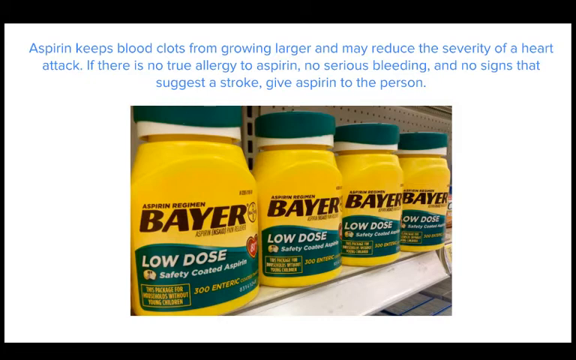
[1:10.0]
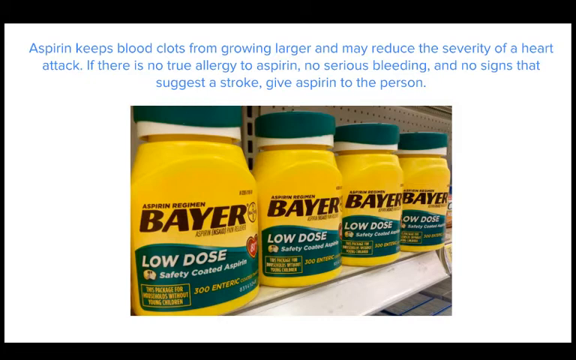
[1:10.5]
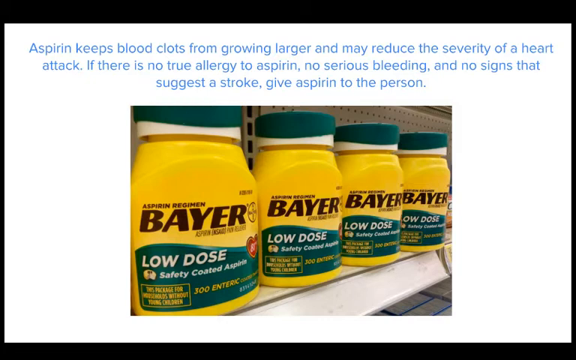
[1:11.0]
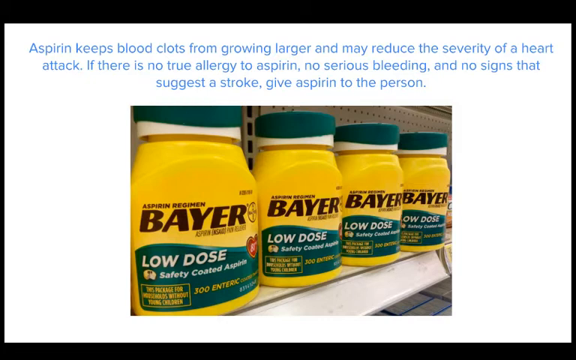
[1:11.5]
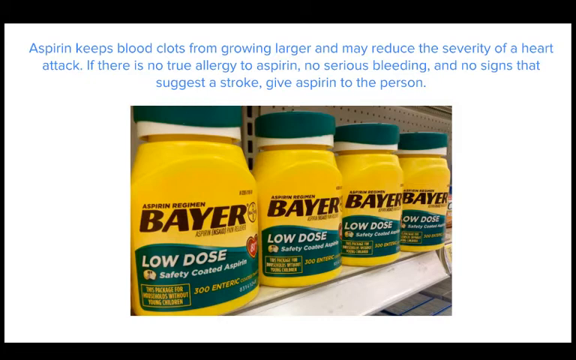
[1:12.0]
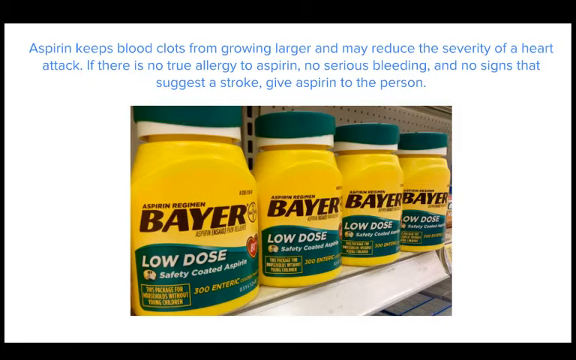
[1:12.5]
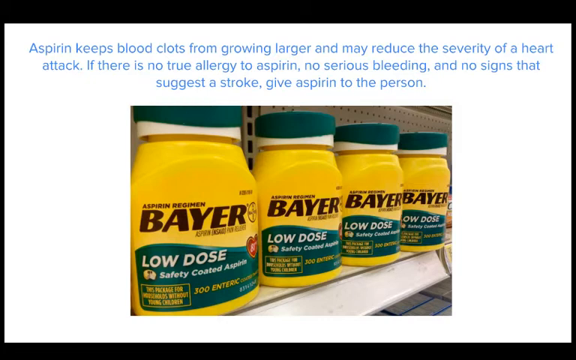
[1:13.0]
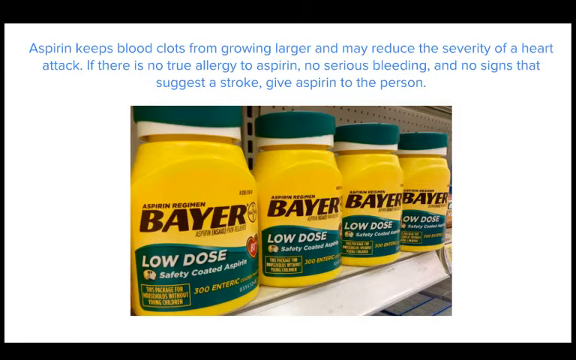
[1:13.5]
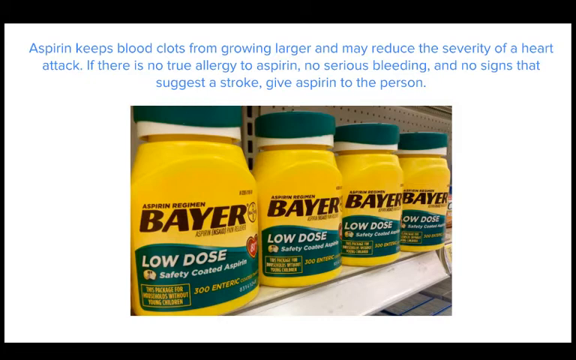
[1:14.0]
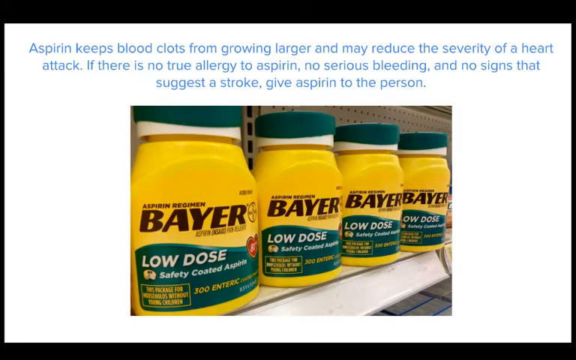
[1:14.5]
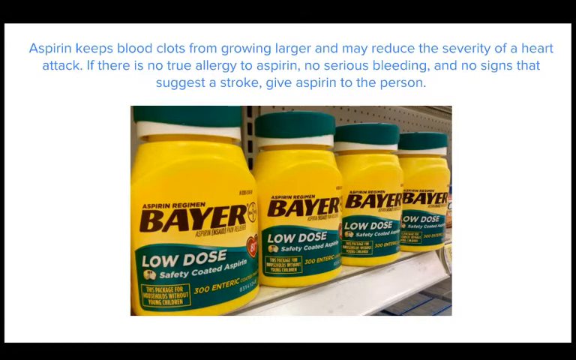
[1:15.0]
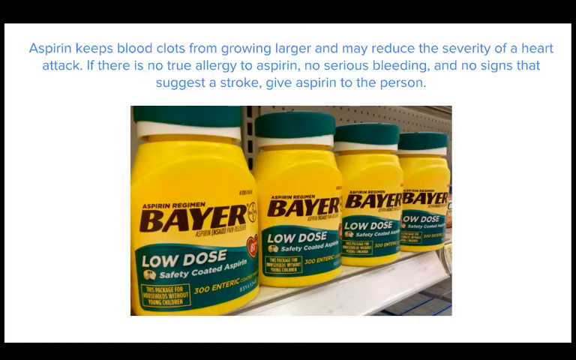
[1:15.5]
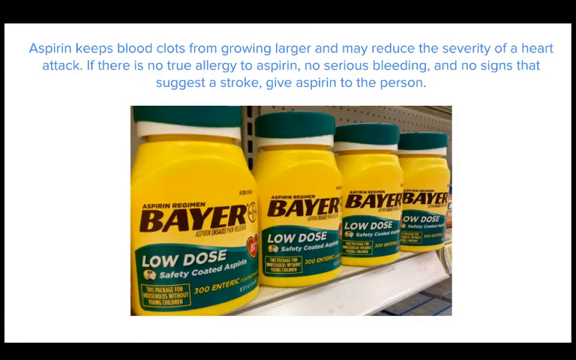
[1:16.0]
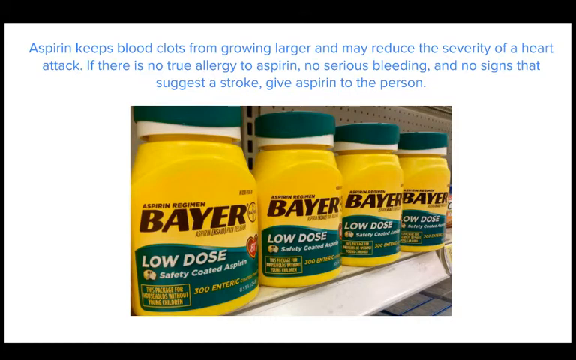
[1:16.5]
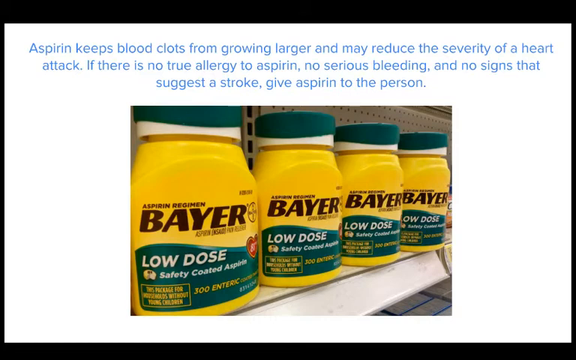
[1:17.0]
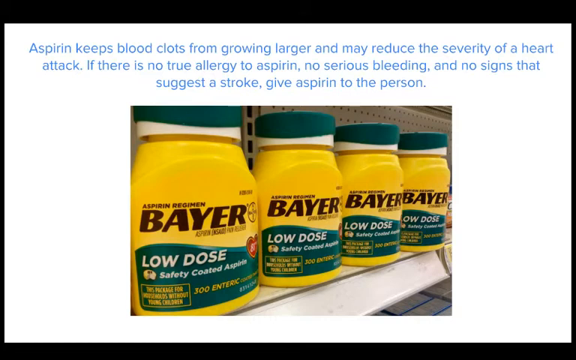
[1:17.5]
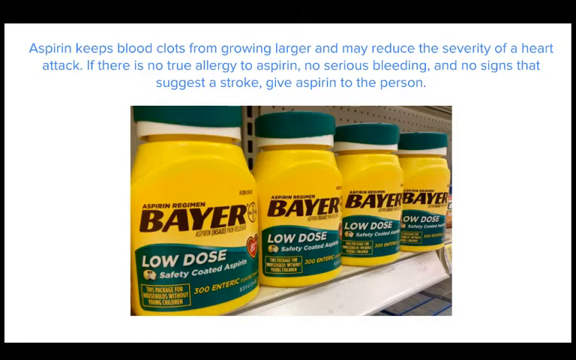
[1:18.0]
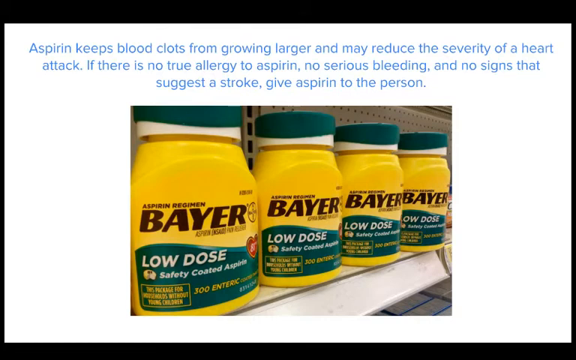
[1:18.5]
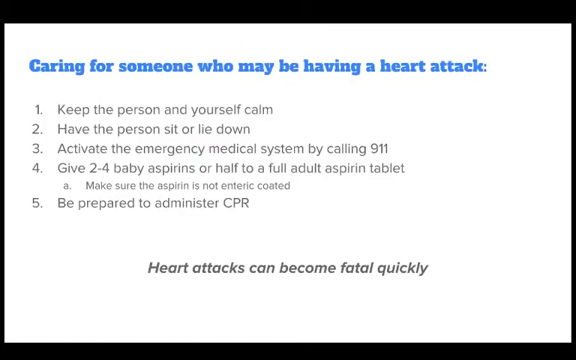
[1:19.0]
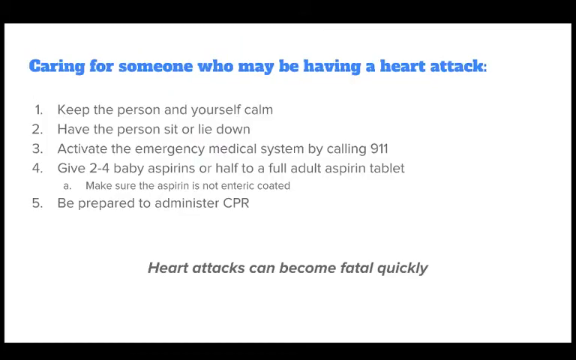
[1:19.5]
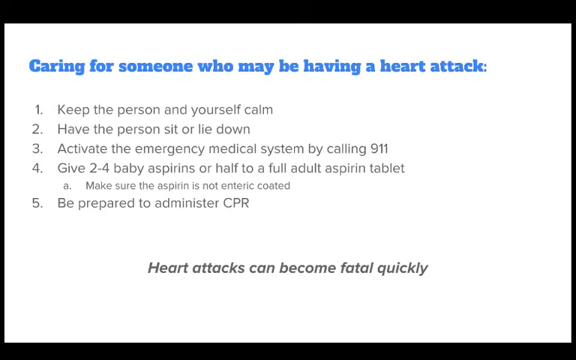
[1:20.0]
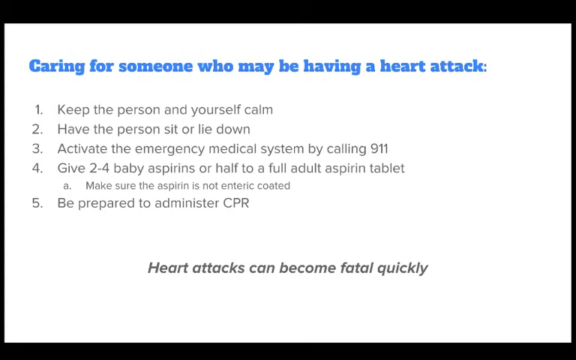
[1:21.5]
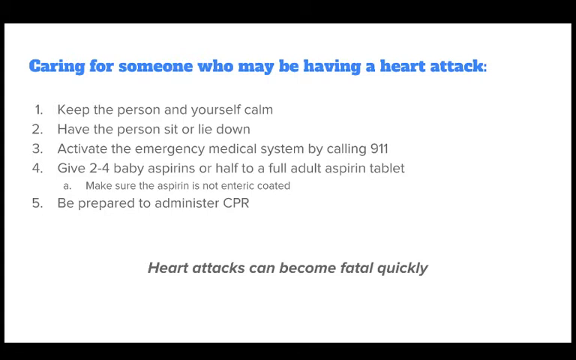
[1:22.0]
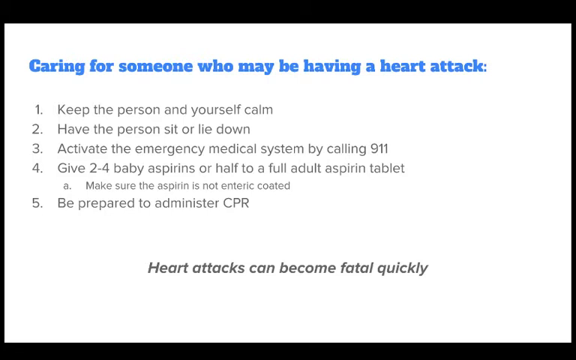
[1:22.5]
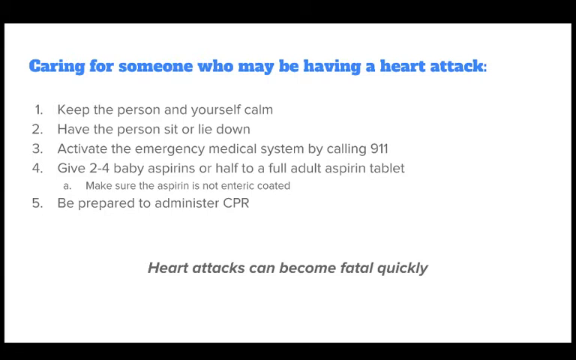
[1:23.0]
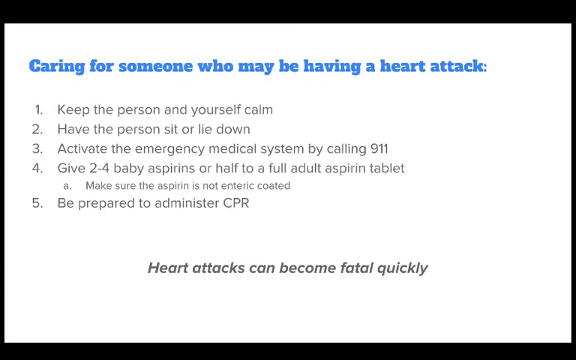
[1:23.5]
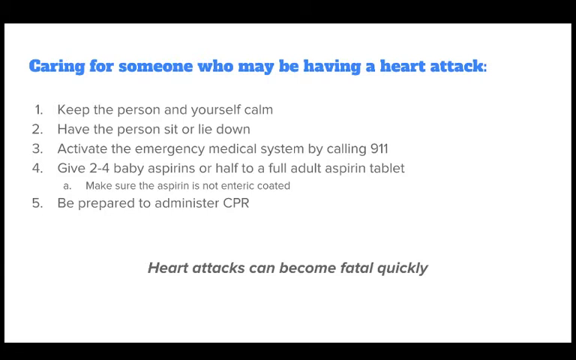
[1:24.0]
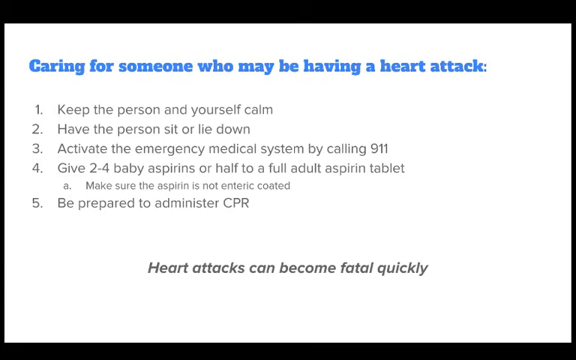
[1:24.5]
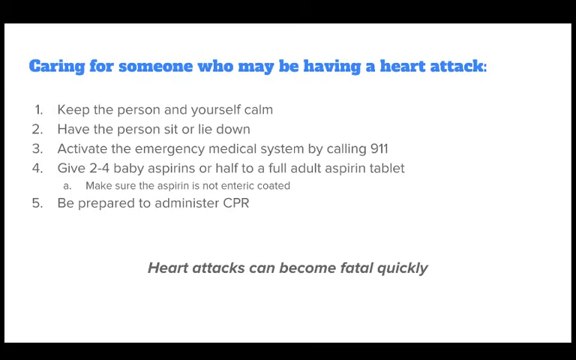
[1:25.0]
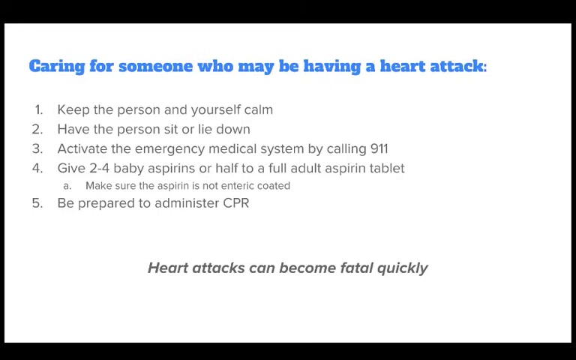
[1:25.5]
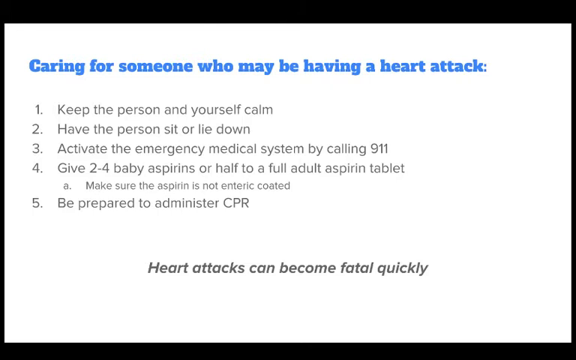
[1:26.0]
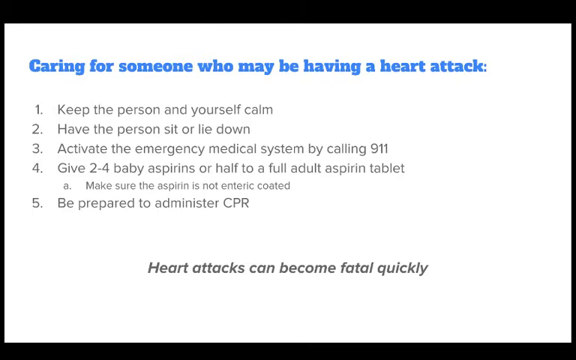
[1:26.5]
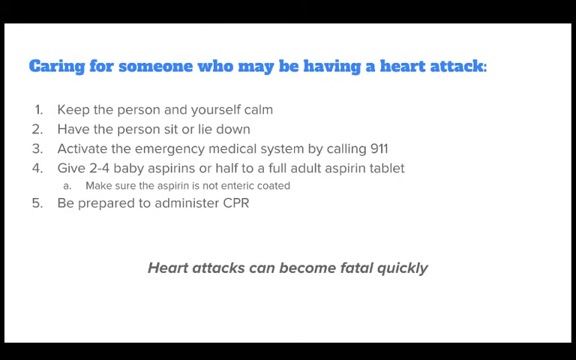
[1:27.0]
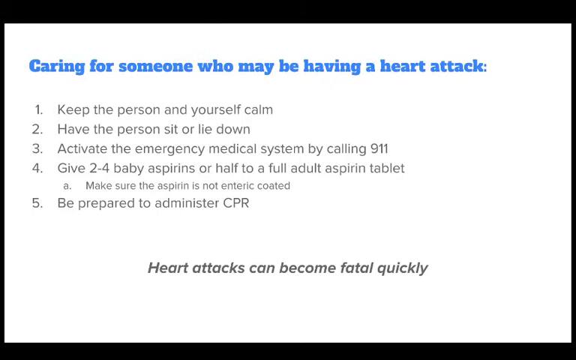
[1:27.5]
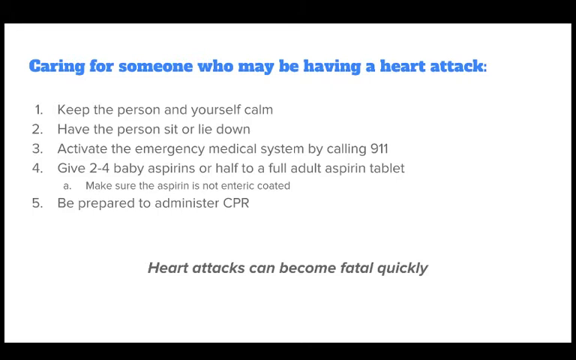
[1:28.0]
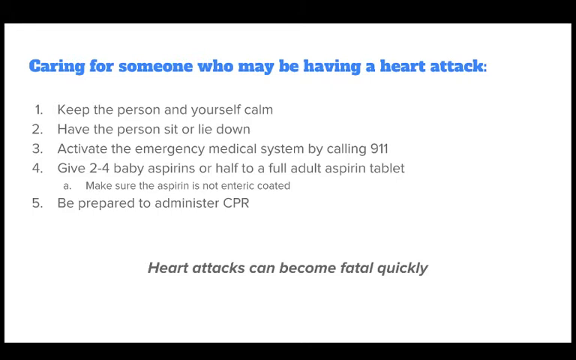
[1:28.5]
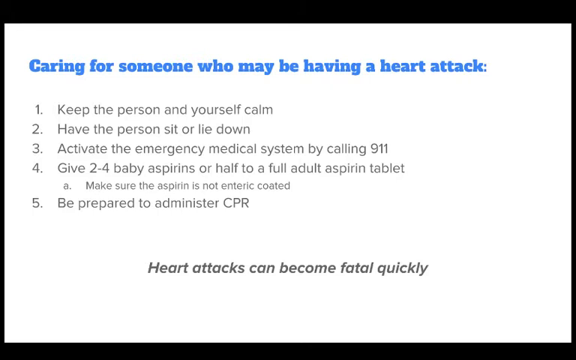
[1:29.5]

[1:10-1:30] The white screen shows blue text at the top reading "Aspirin keeps blood clots from growing larger and may reduce the severity of a heart attack if there is no true allergy to aspirin, no serious bleeding and no signs that suggest a stroke give aspirin to the person." Underneath is an image of four yellow and green aspirin bottles side by side on a shop shelf. The video transitions to a new white screen with blue text at the top reading "caring for someone who may be having a heart attack." Underneath, grey text numbered 1 to 5 is listed vertically: "1, keep the person and yourself calm. 2, have the person sit or lie down. 3, activate the emergency medical system by calling 911. 4, give 2-4 baby aspirins or half to a full adult aspirin tablet." A subsection under number 4 says "A, make sure the aspirin is not enteric coated." Number 5 says "be prepared to administer CPR." At the bottom of the screen, centred grey text that is slightly bolder than the other text says "heart attacks can become fatal quickly."